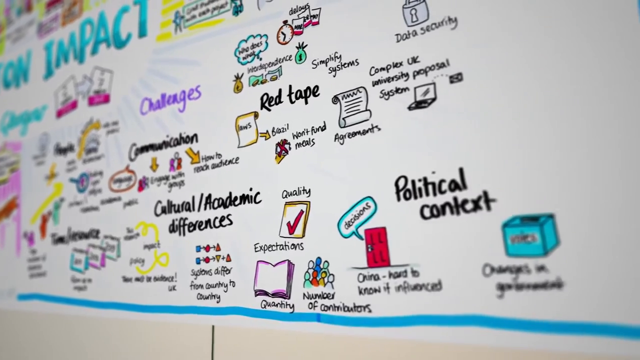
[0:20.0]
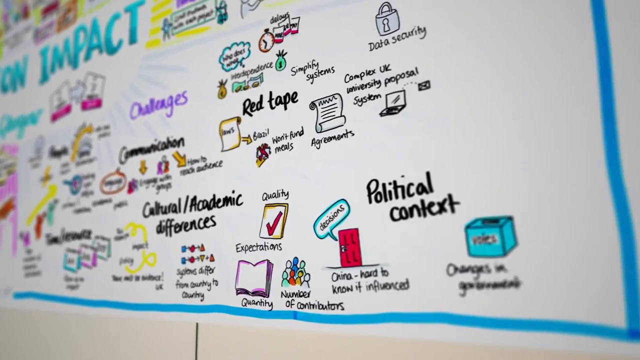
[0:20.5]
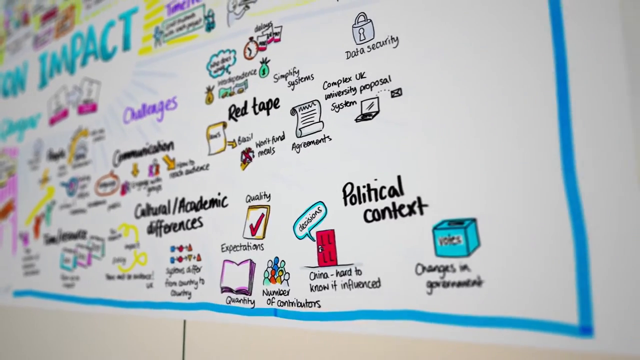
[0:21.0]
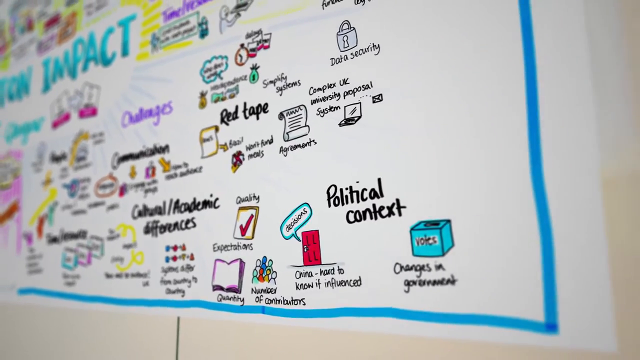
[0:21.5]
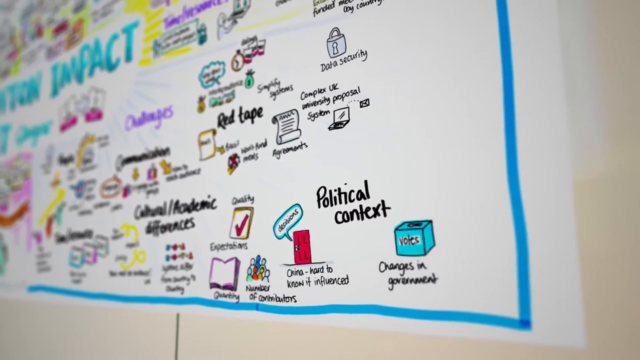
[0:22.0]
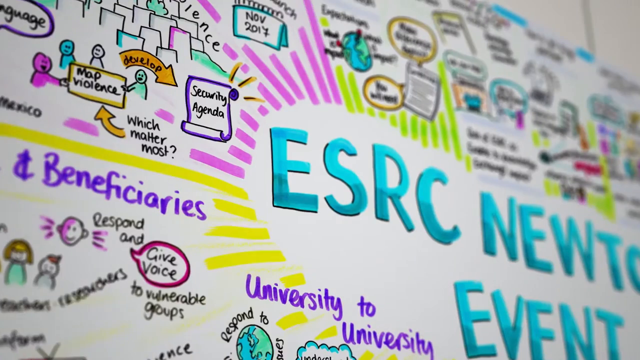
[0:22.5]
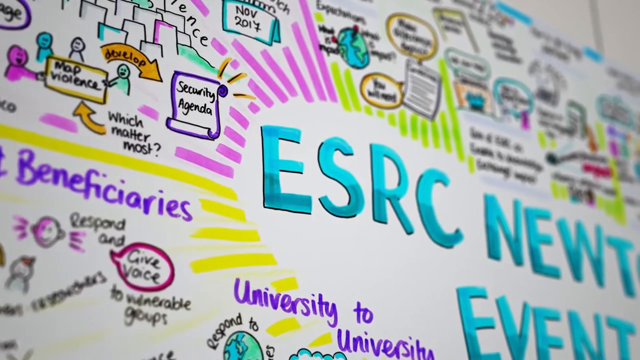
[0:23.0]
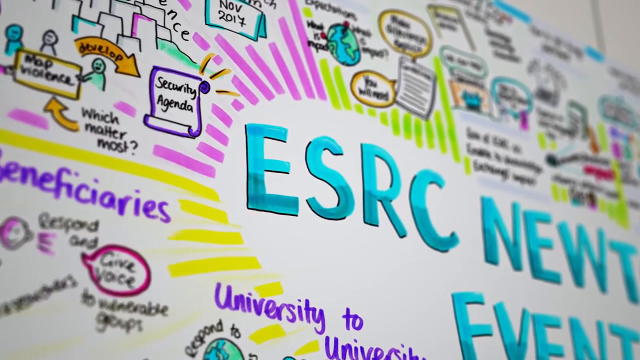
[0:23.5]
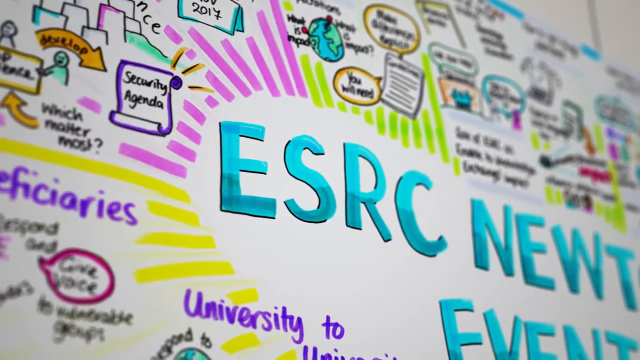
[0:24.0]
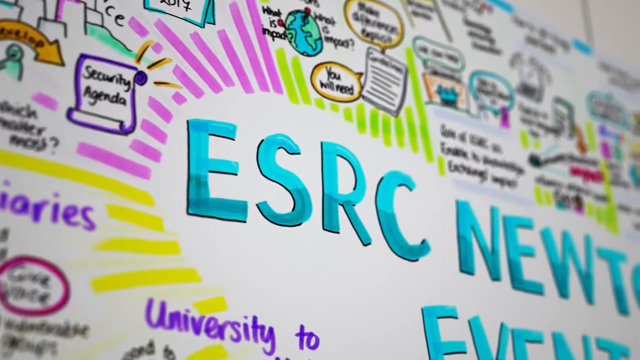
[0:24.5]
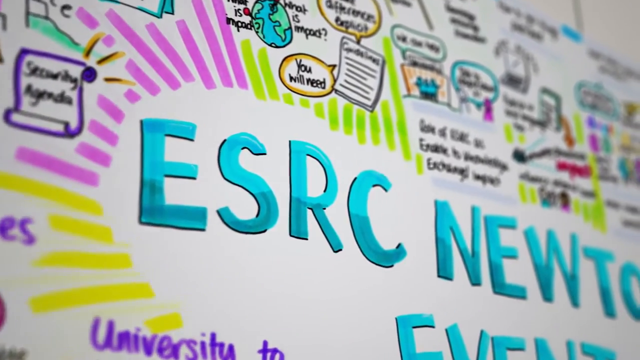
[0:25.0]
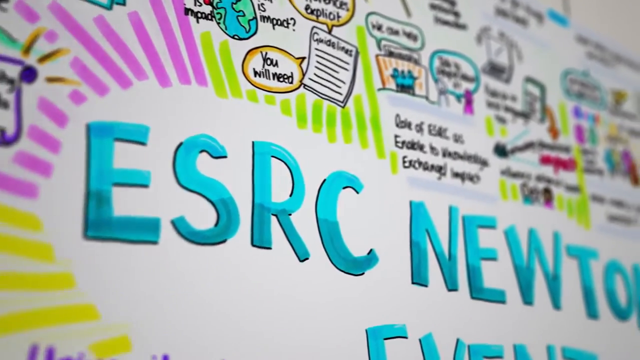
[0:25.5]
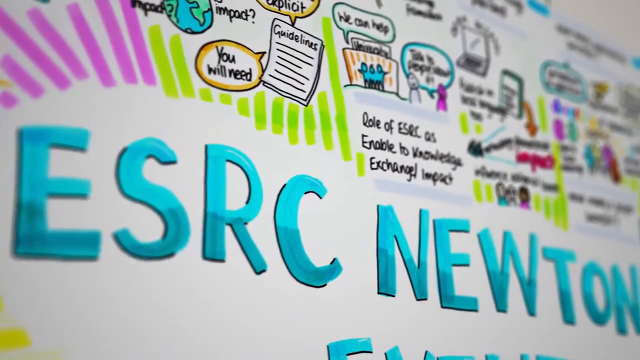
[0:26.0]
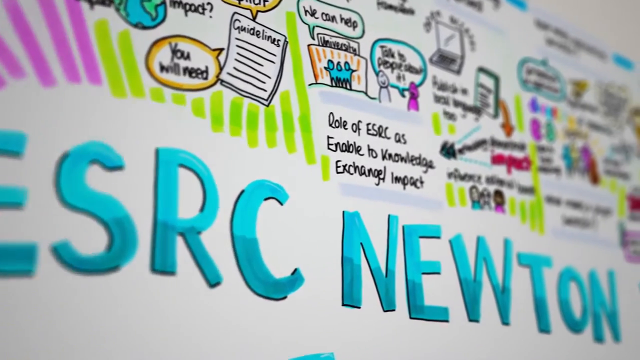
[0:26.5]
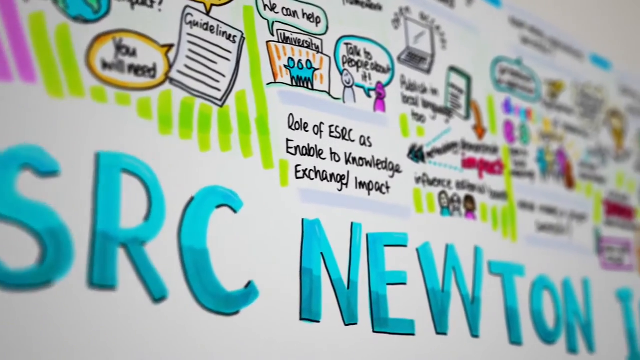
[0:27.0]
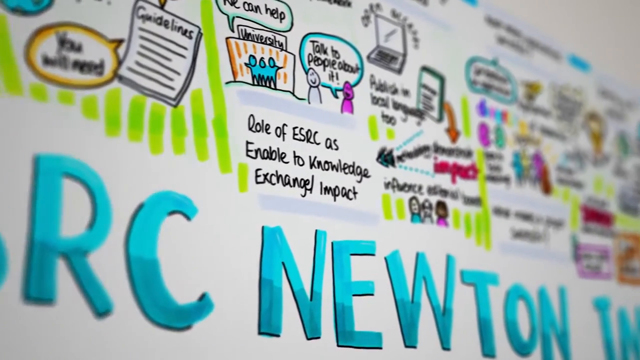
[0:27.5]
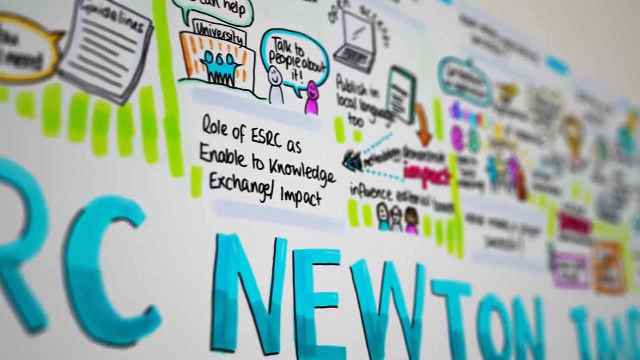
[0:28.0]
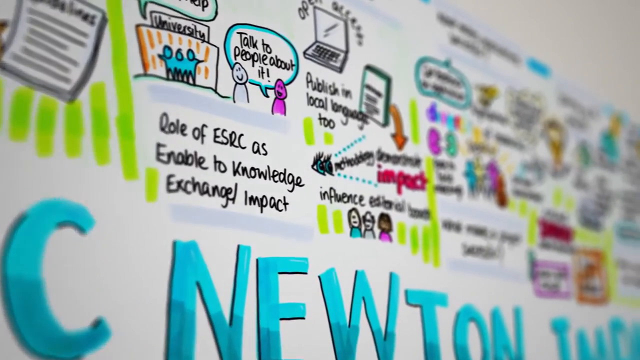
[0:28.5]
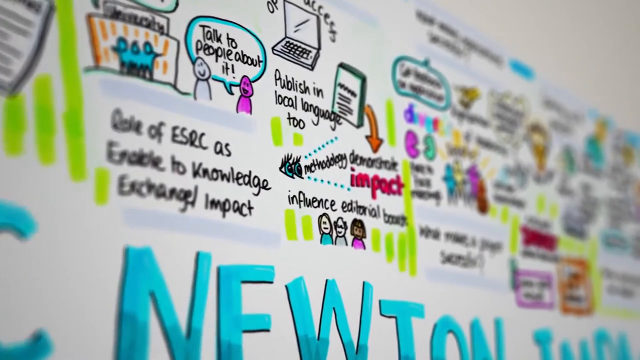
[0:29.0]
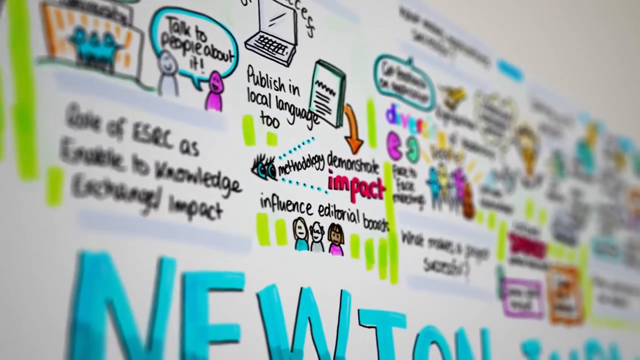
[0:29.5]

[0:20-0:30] The video continues in slower motion, mainly focusing on the whiteboard with its doodles and little conversation bubbles. The woman seems to have been trying to picture some sort of chain reaction within the conference. The main text still reads "ESRC Newton Impact." Small subtitles read "red tape," "political context," "cultural academic differences," and "communication," and the word "challenges" is highlighted in purple. The video appears to have been shot with a professional camera, and the editing also looks professional.